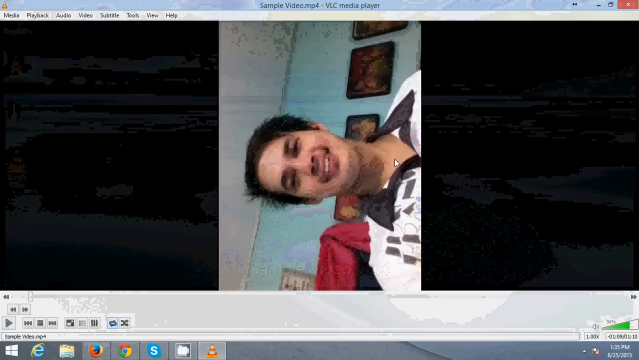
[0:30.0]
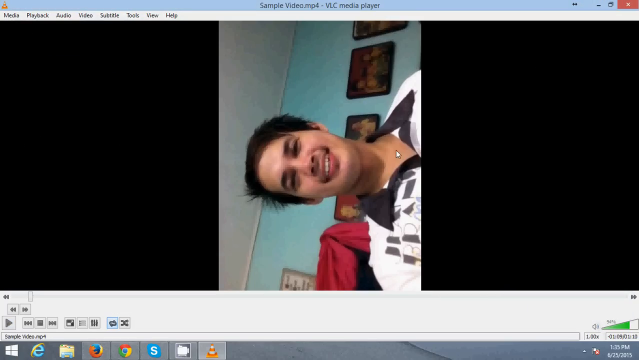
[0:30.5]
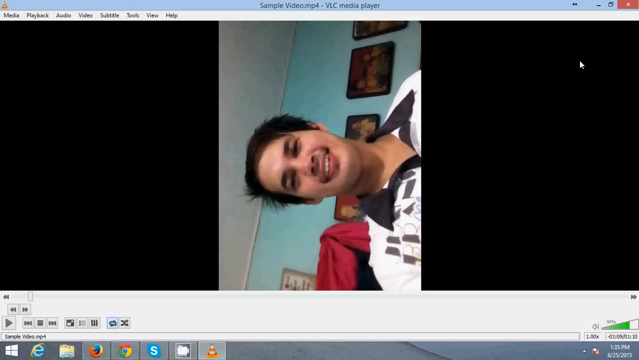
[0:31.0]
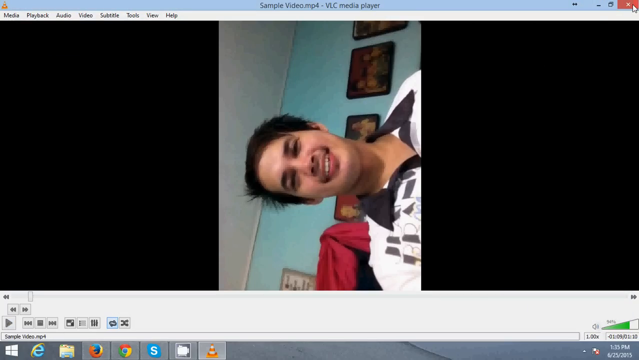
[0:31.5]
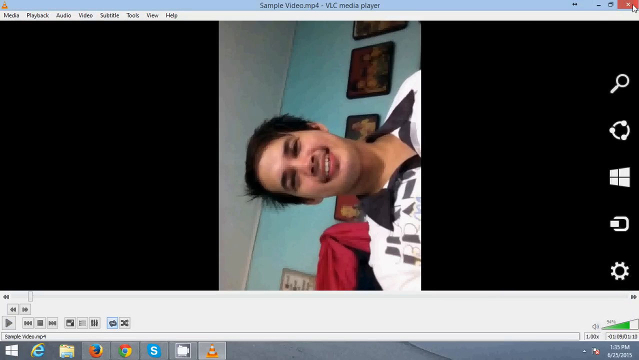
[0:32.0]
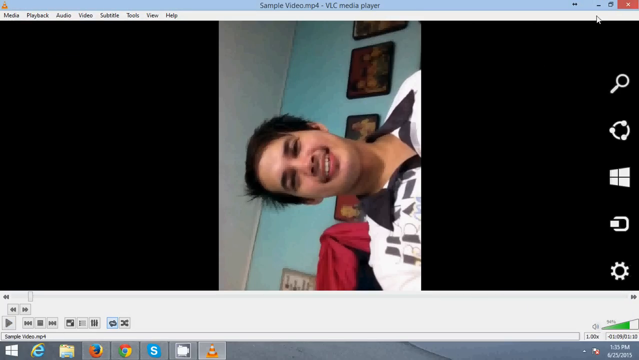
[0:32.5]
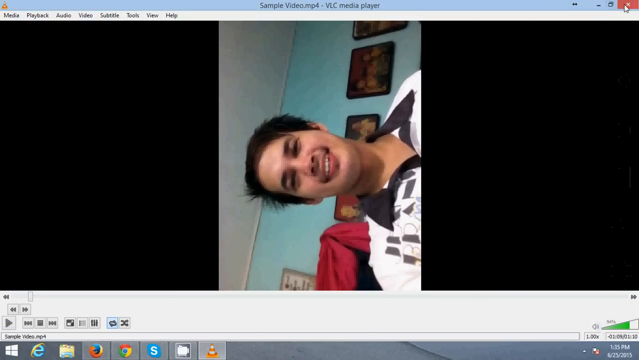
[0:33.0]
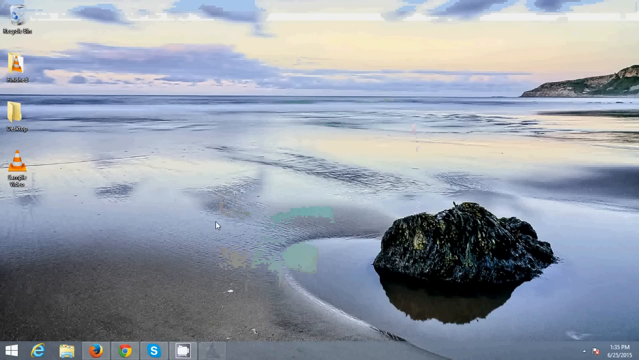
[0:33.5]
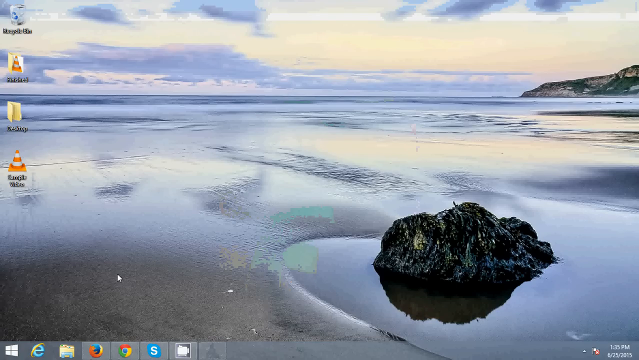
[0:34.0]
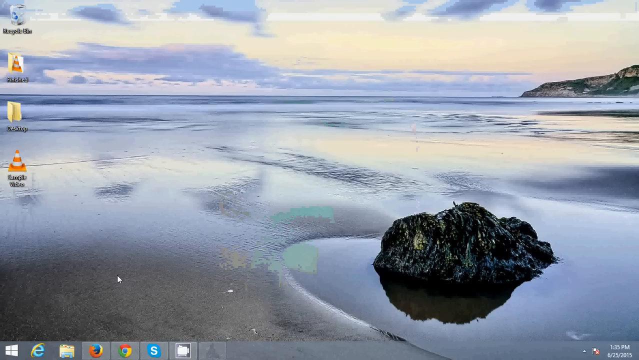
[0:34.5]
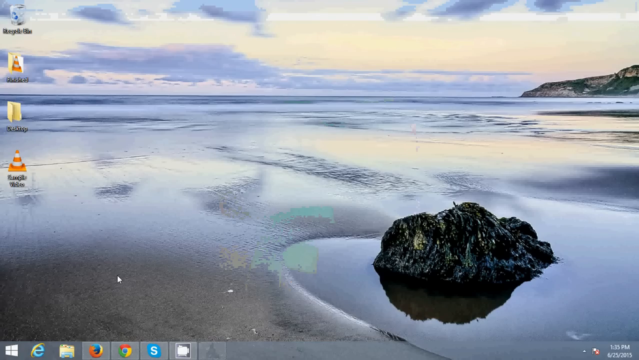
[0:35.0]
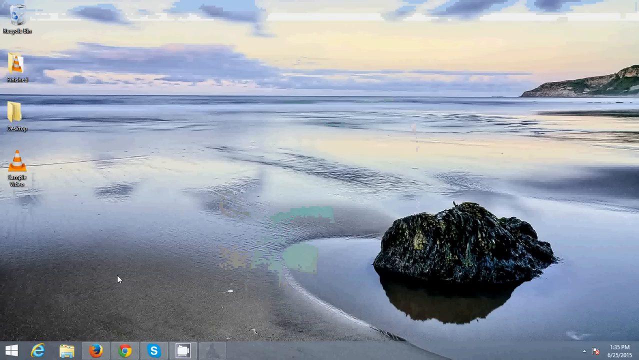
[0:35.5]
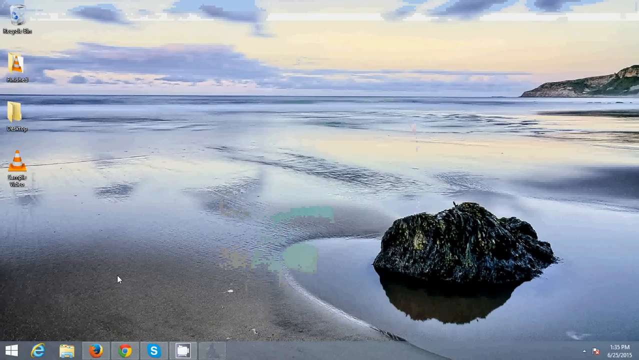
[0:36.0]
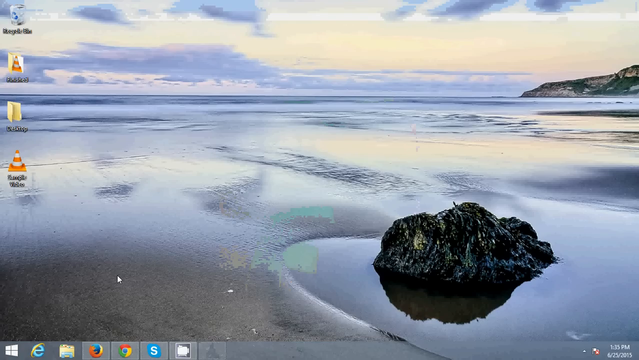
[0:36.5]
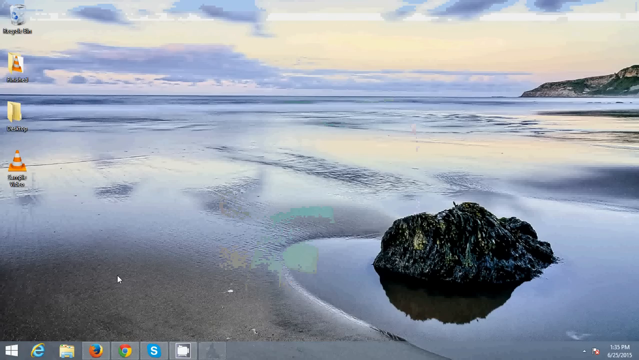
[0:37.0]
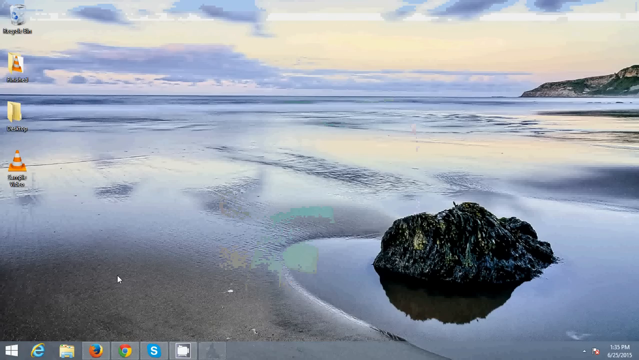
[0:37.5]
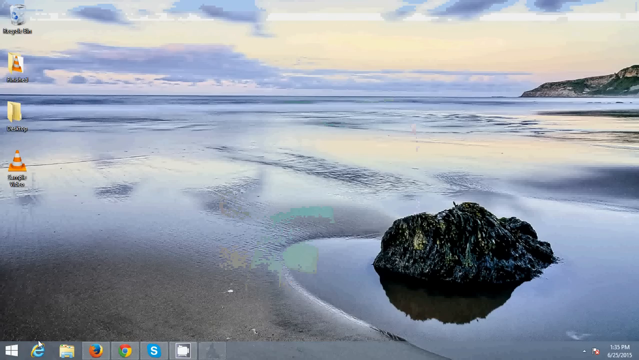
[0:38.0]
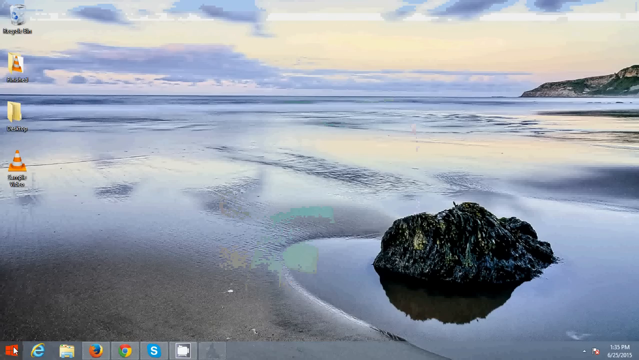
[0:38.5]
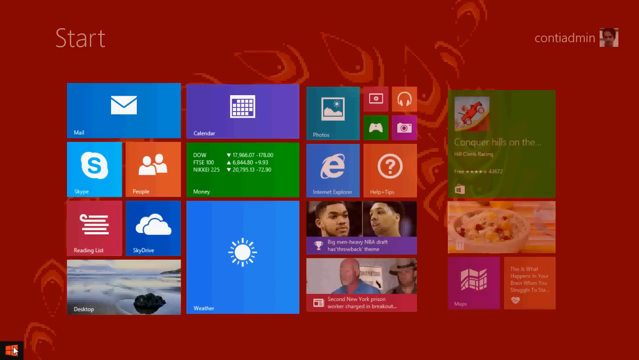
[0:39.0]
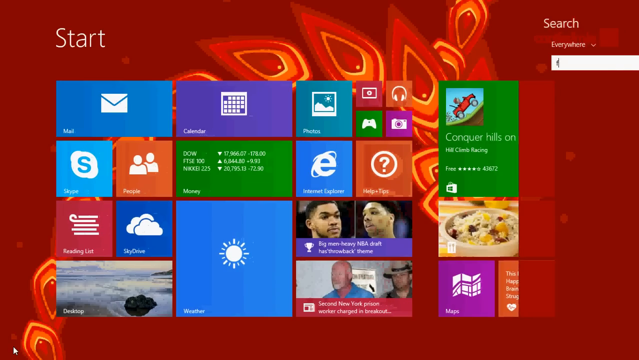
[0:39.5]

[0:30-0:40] The video screen continues, with a black background and the video of the smiling man in the white shirt with a black collar. The cursor moves across the screen to the red X icon in the top right-hand corner, which closes the video and returns directly to the Windows desktop with the image of the beach and the sea. The white cursor arrow then moves to the Windows icon in the bottom left-hand corner of the desktop. This brings up a new, red screen showing Start near the top, a search bar, and numerous icons such as Mail, Skype and Calendar.